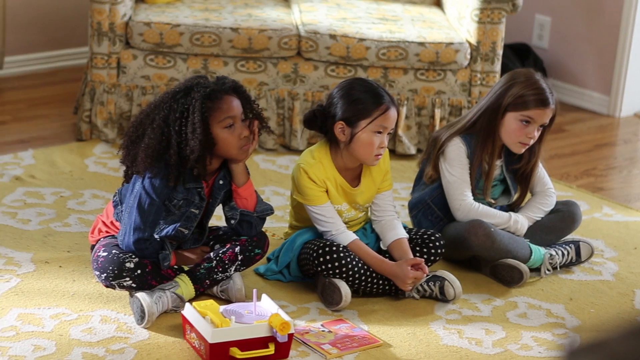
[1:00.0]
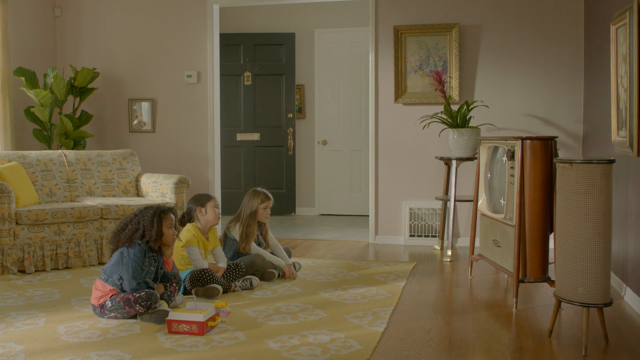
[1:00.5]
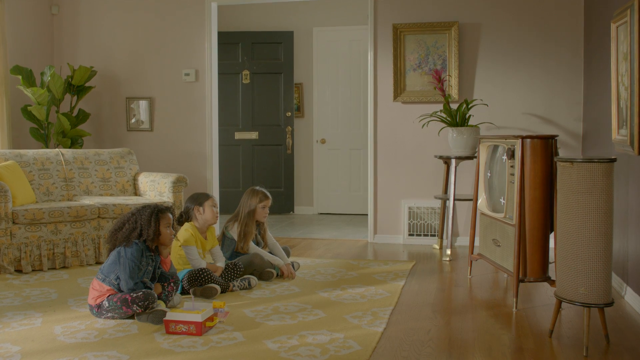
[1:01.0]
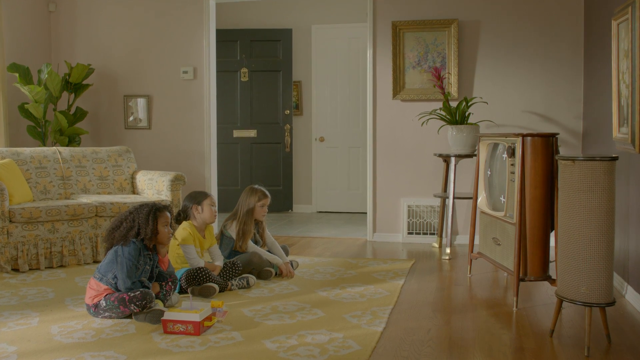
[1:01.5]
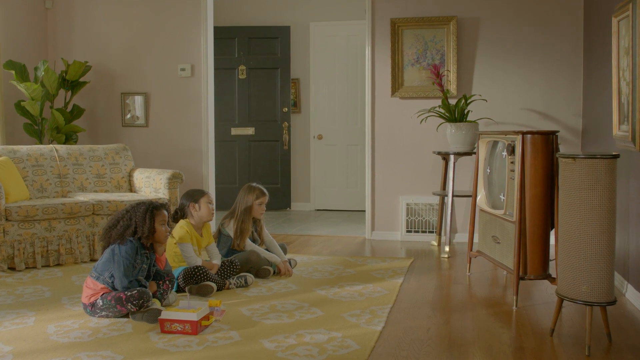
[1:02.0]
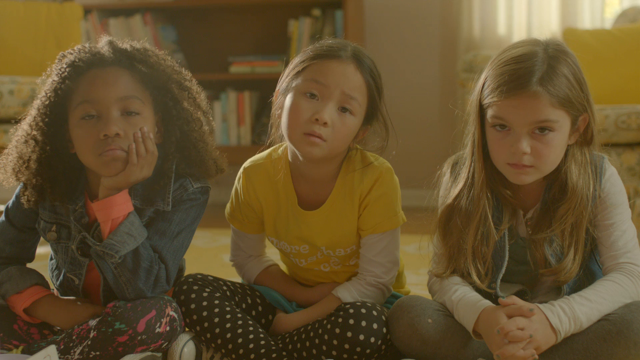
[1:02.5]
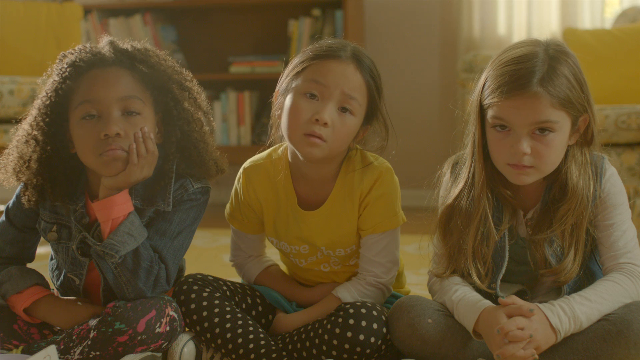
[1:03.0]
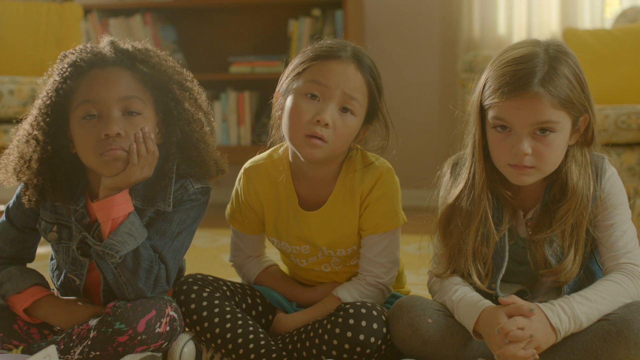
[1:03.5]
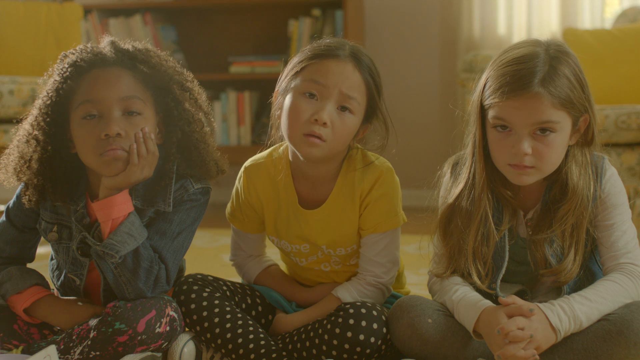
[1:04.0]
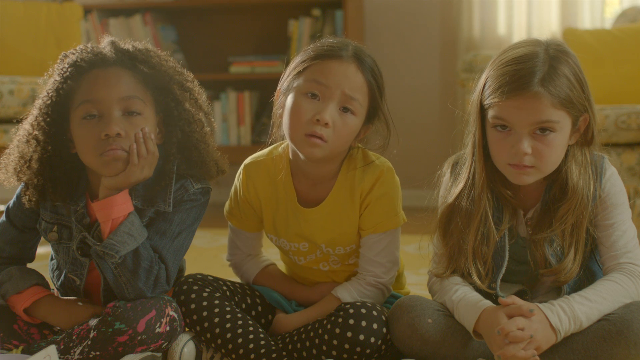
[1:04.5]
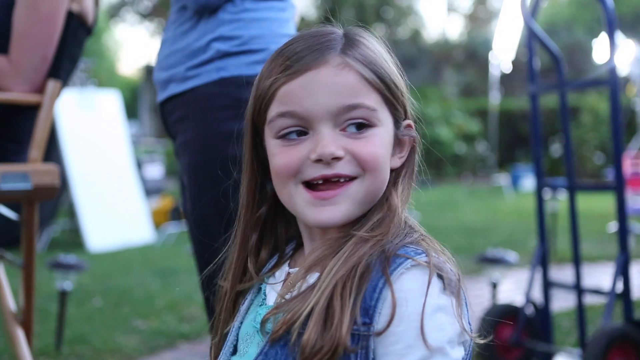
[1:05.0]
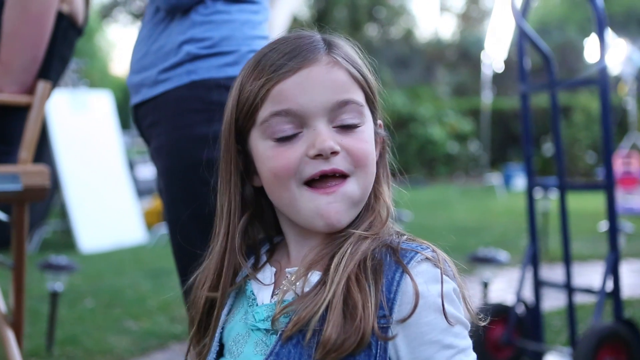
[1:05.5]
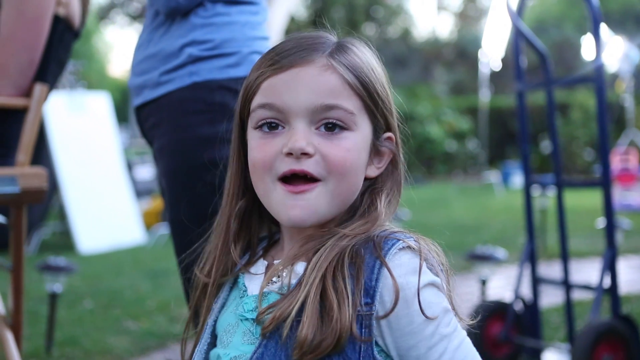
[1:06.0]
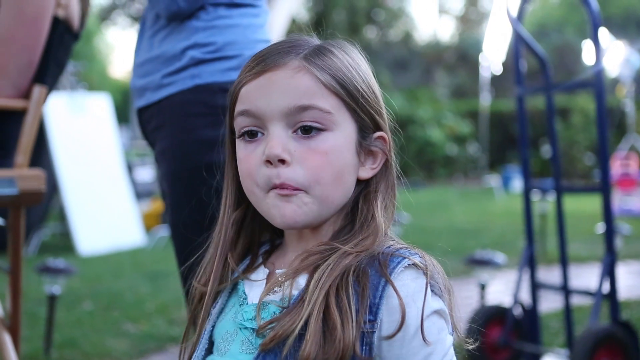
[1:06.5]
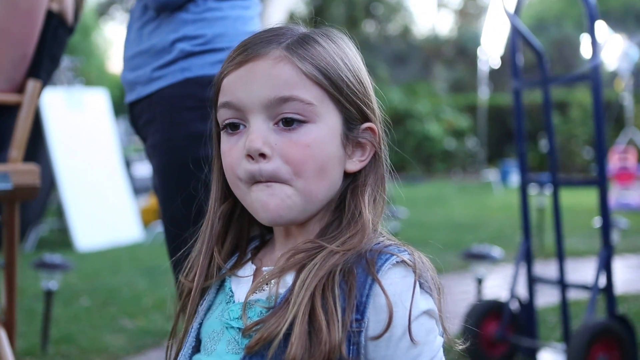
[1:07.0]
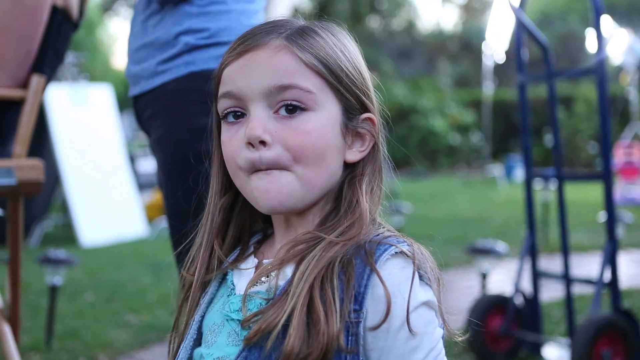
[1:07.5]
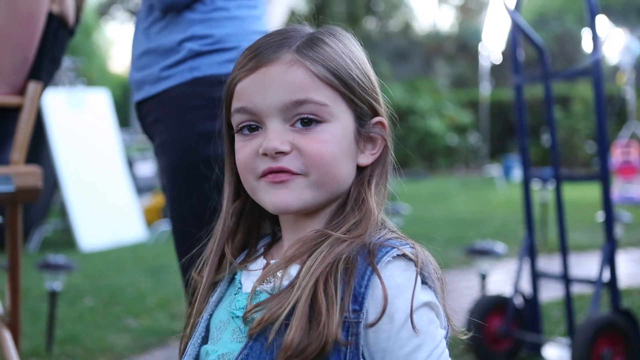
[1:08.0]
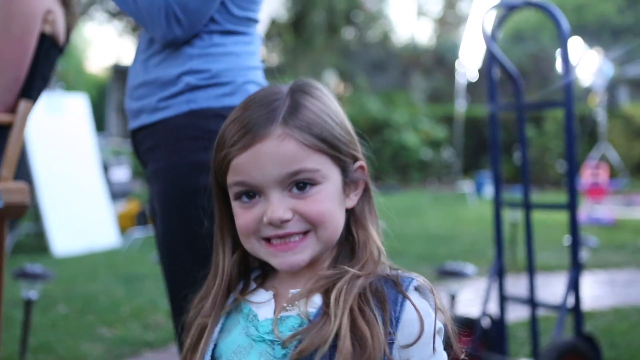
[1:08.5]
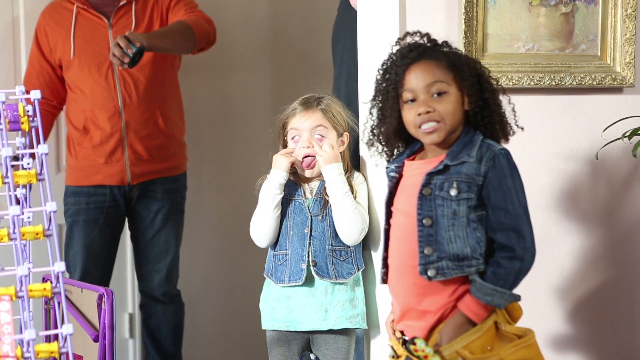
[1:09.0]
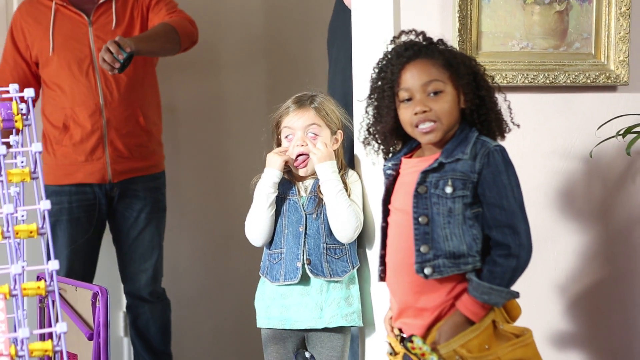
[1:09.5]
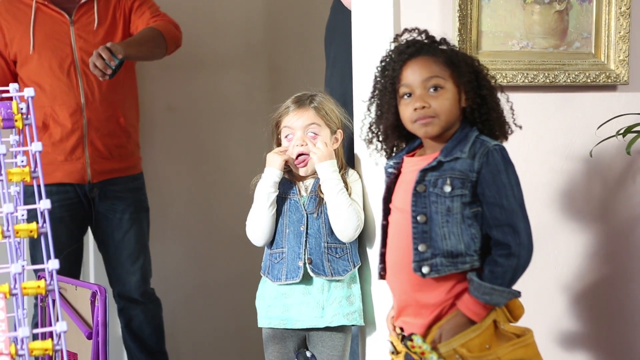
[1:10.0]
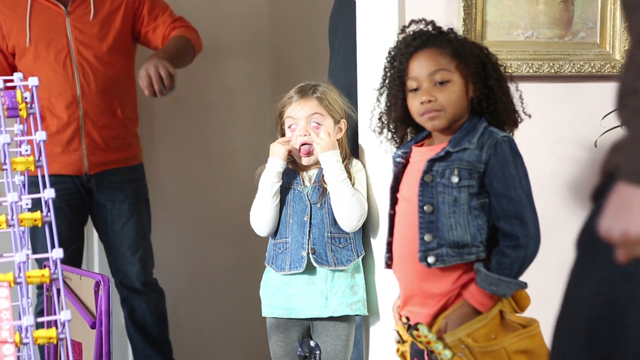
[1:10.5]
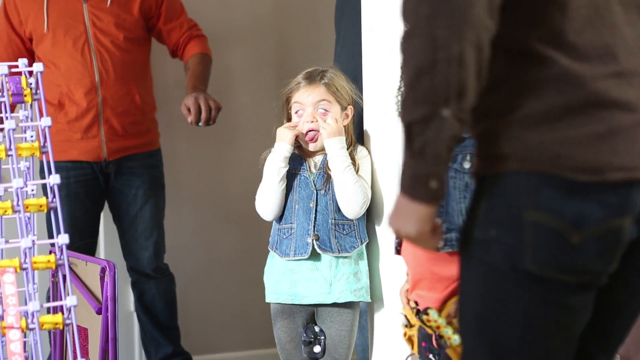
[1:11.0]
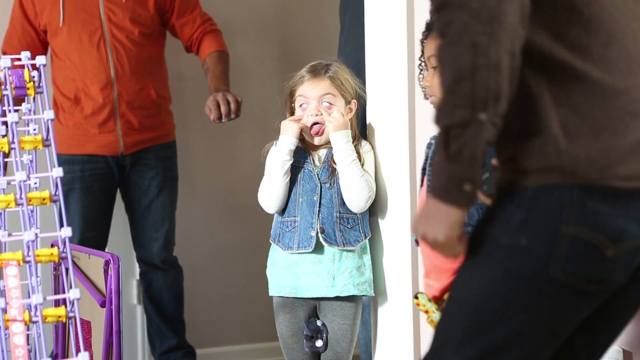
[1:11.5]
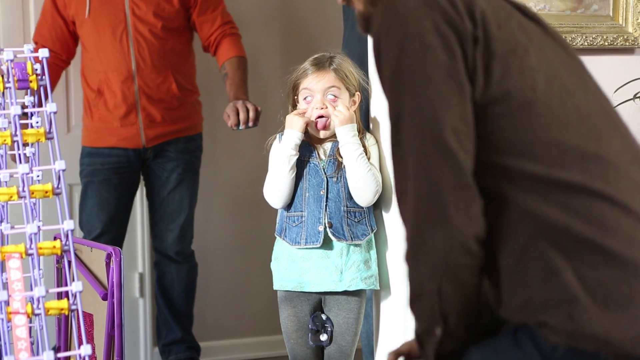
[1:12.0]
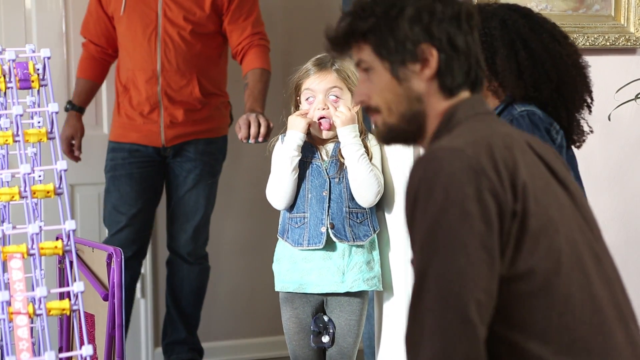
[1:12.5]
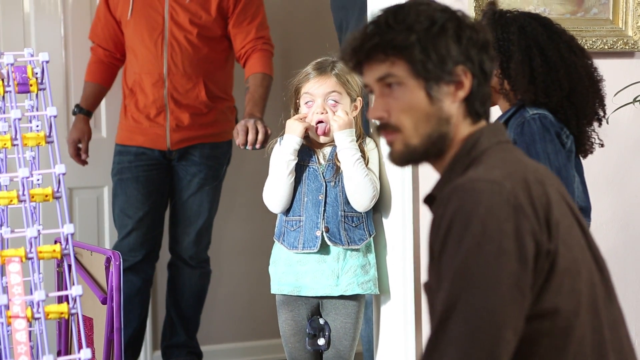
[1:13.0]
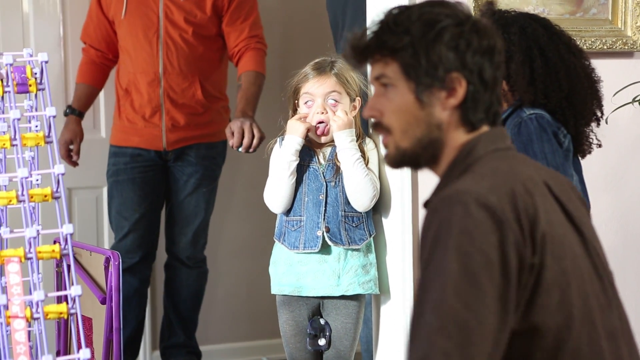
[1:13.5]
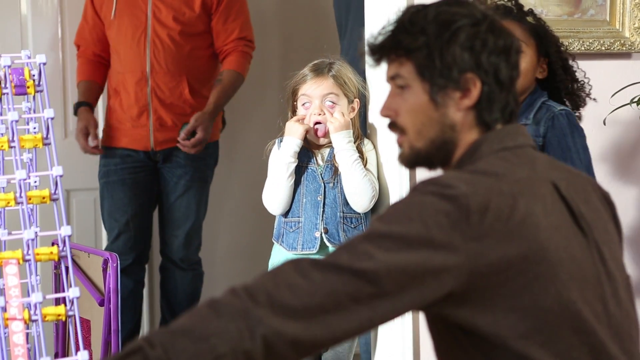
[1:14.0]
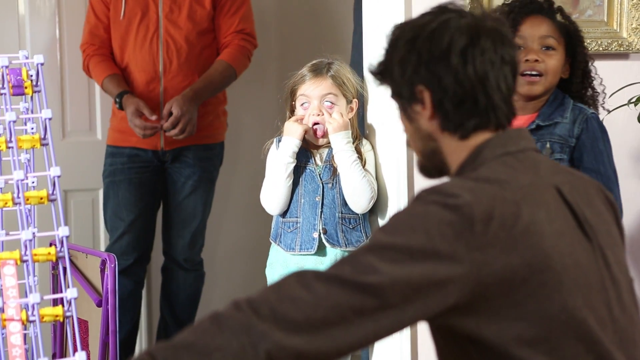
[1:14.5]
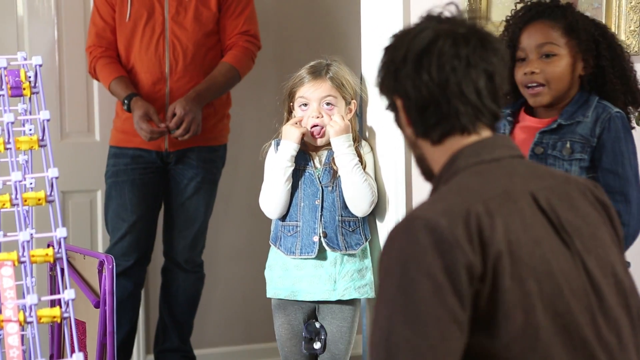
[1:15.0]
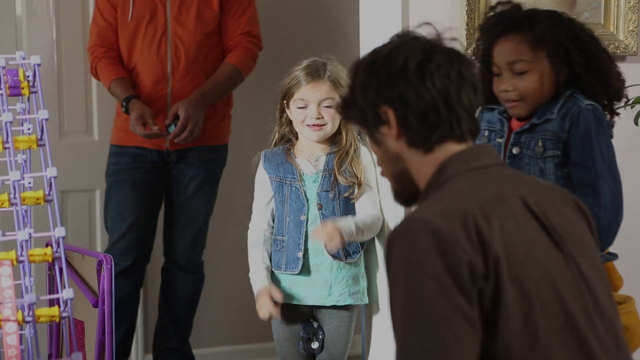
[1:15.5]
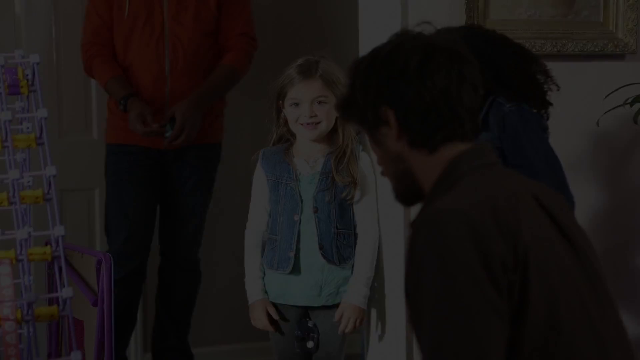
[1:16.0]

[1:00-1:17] The subjects are three girls and approximately five adults, shown at least partially; only one adult is fully shown, and it is hard to say whether some of the adults are the same people. Three girls sit in the living room, apparently watching TV, possibly the video that was created. The video then moves to the girl talking to the camera. Next, the six-year-old inventor is in the living room making funny faces at the camera, standing next to another girl; three adults are in this scene, but only one is fully seen. The setting moves from inside the house, to outside, and then inside the house again.